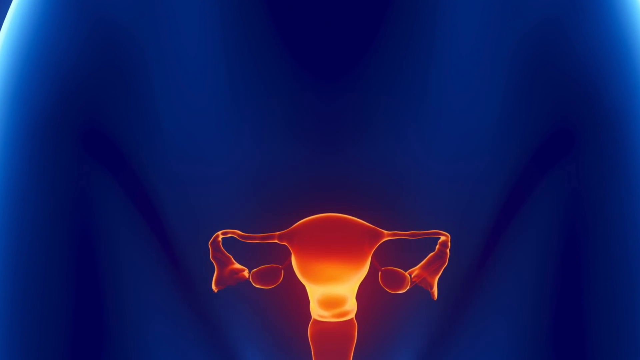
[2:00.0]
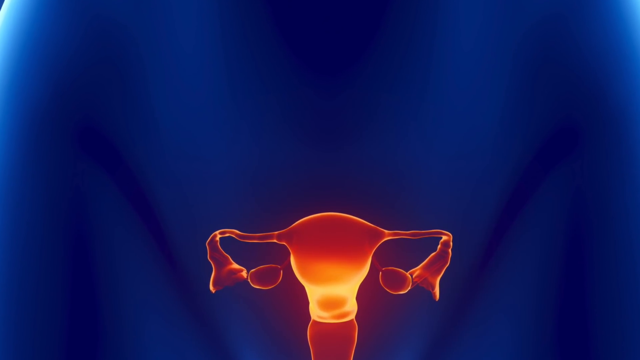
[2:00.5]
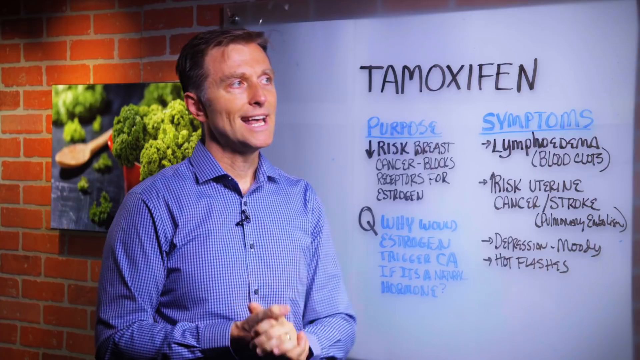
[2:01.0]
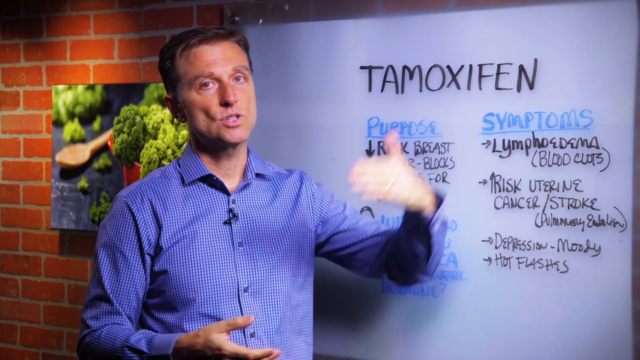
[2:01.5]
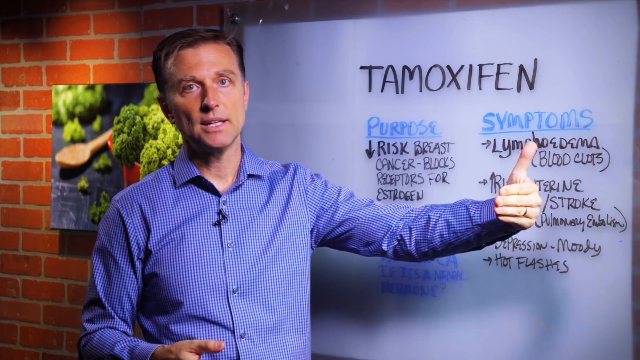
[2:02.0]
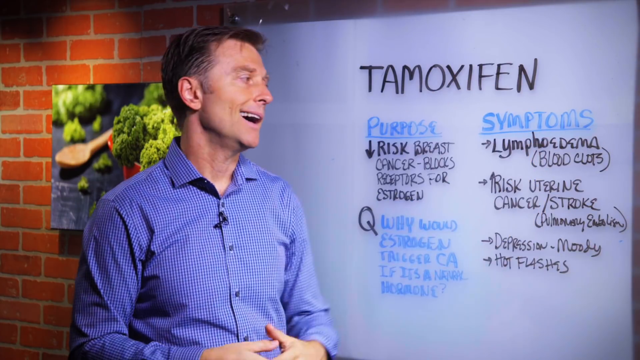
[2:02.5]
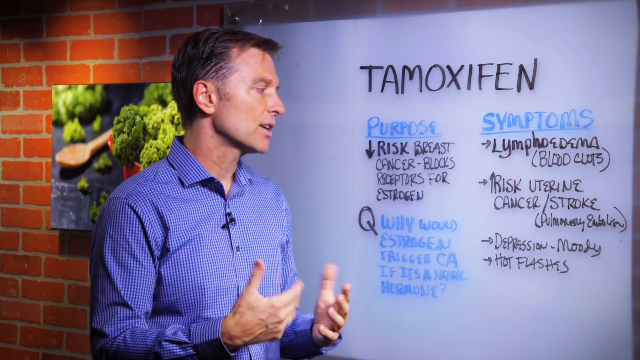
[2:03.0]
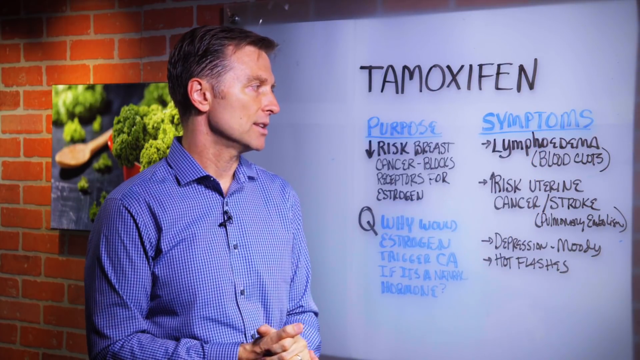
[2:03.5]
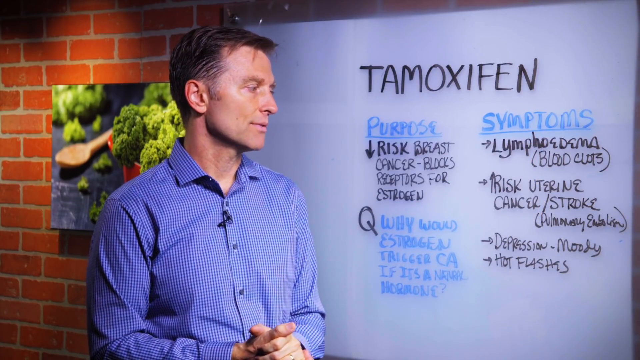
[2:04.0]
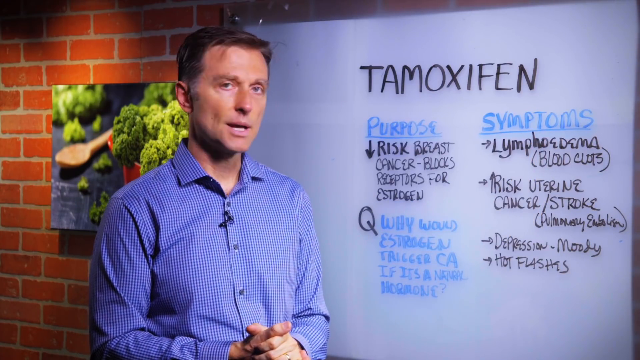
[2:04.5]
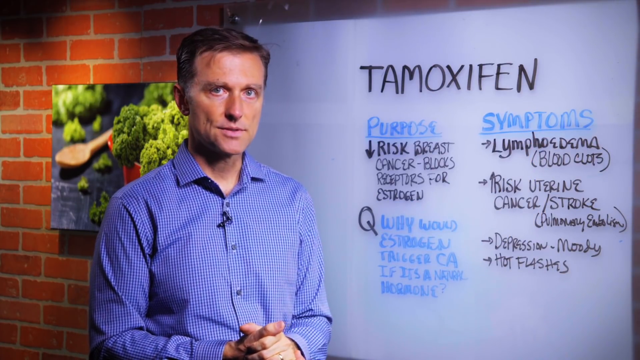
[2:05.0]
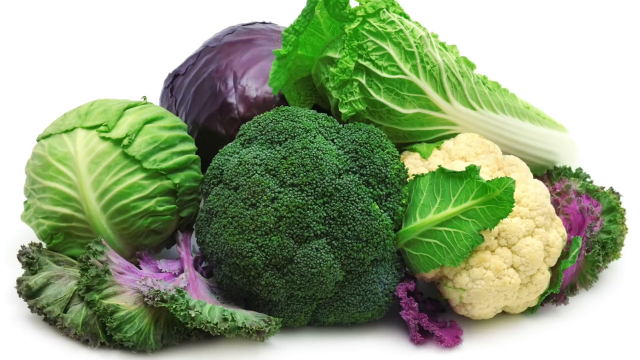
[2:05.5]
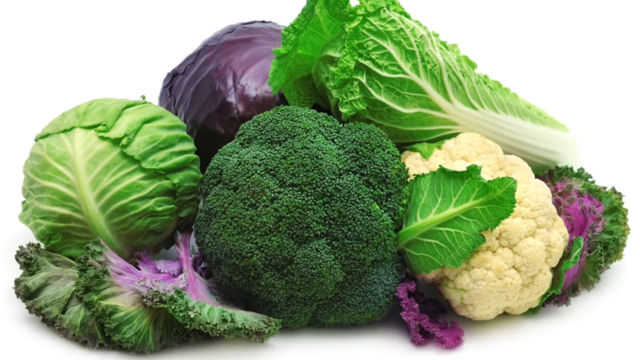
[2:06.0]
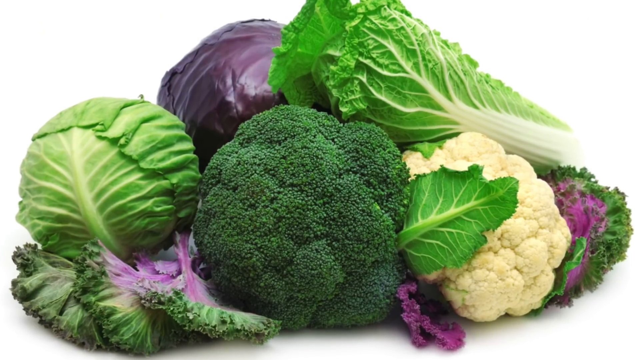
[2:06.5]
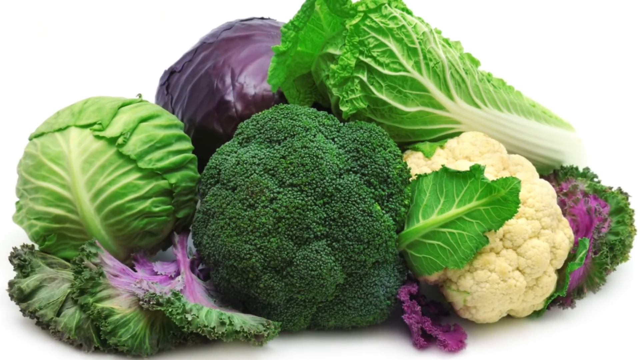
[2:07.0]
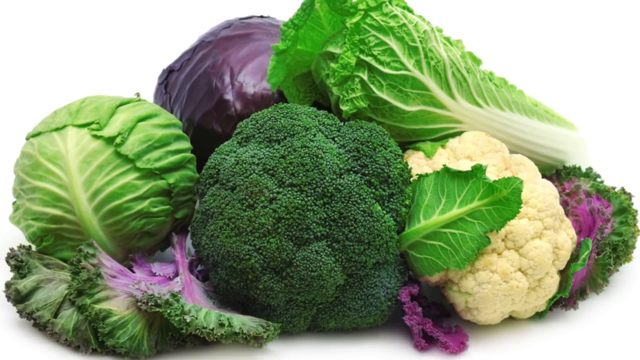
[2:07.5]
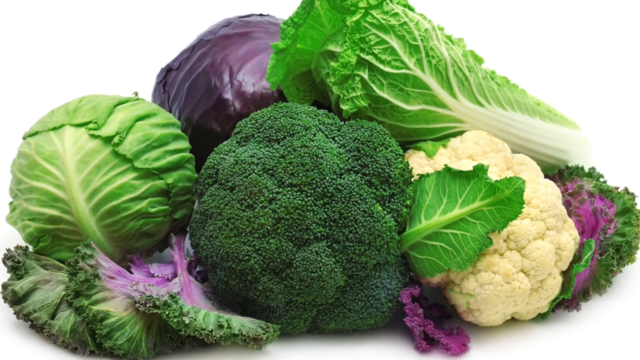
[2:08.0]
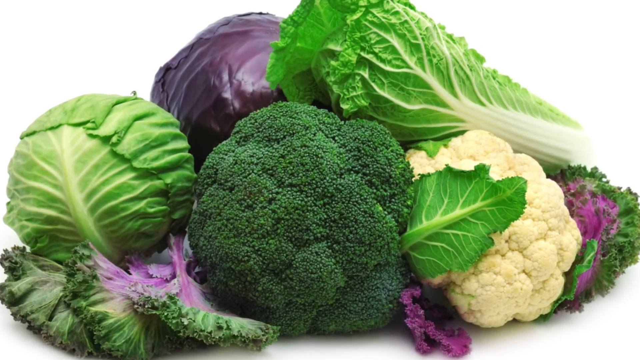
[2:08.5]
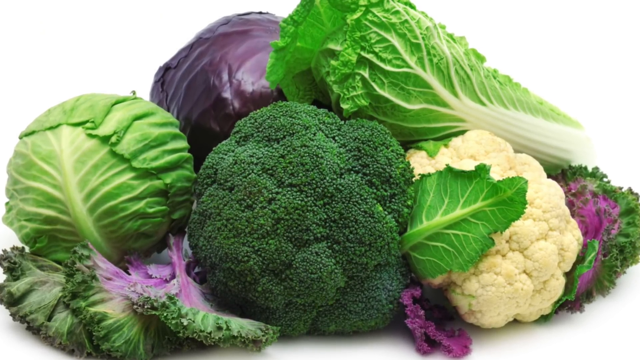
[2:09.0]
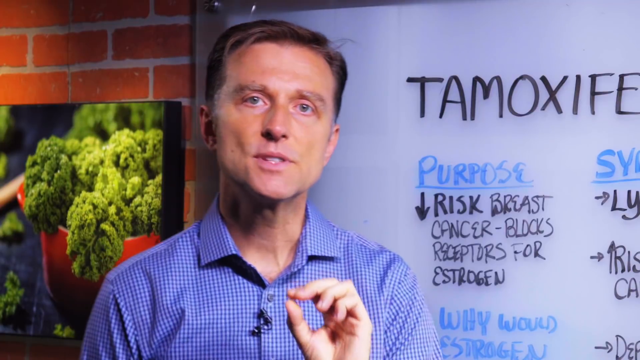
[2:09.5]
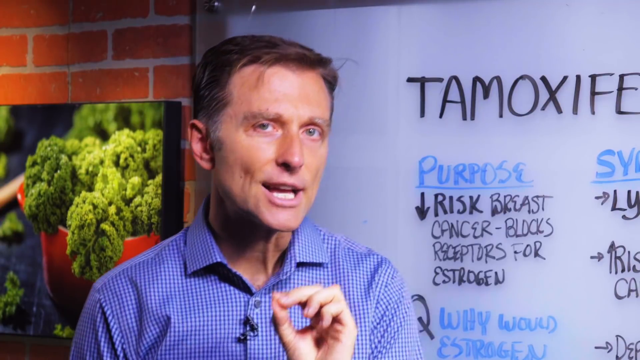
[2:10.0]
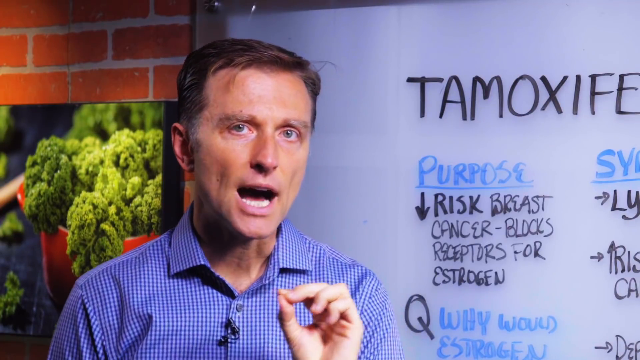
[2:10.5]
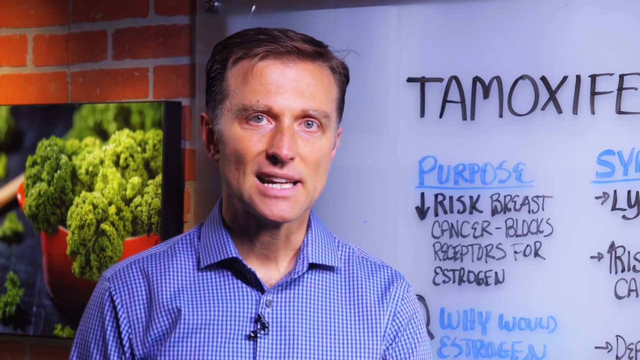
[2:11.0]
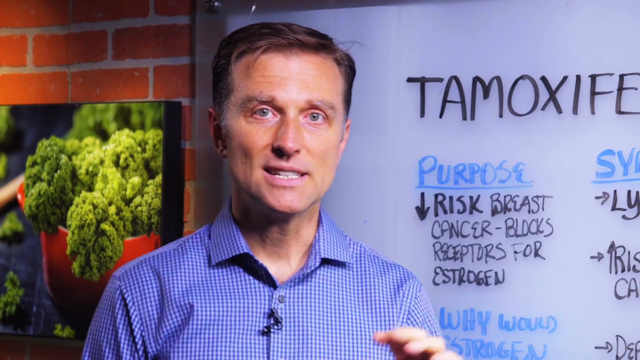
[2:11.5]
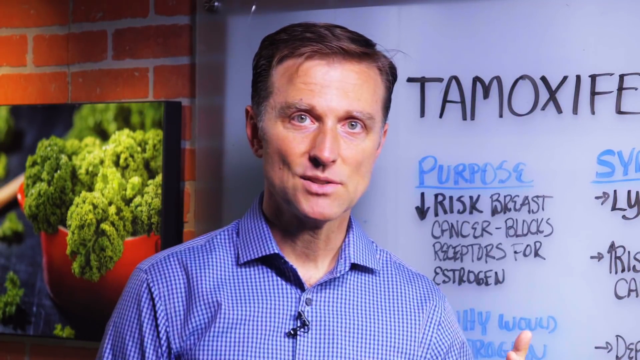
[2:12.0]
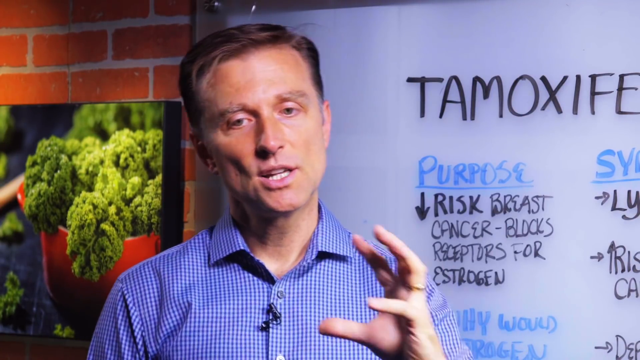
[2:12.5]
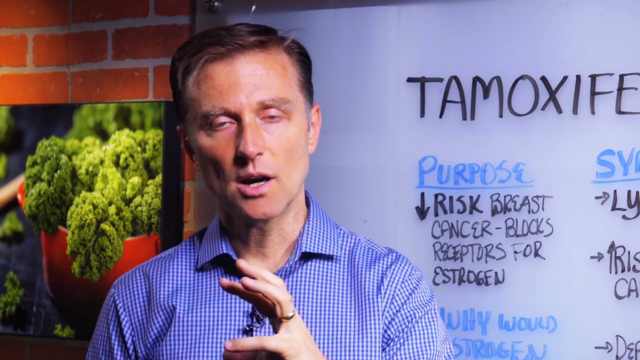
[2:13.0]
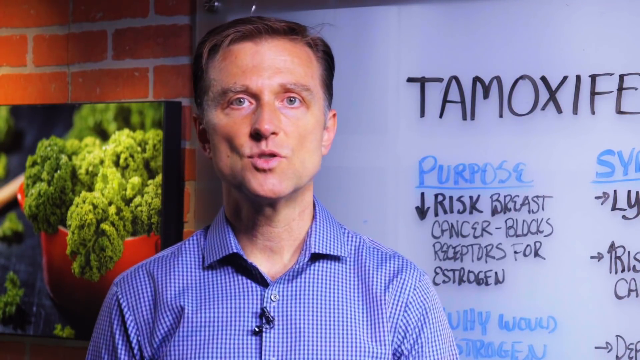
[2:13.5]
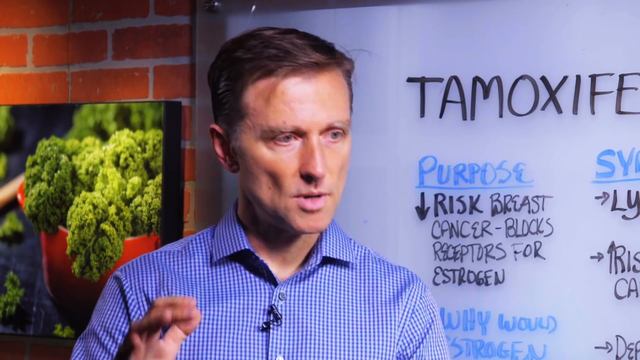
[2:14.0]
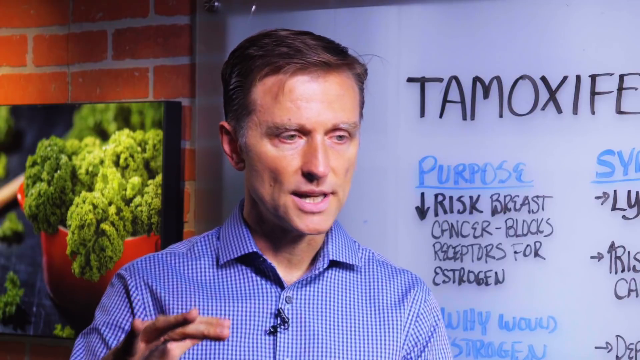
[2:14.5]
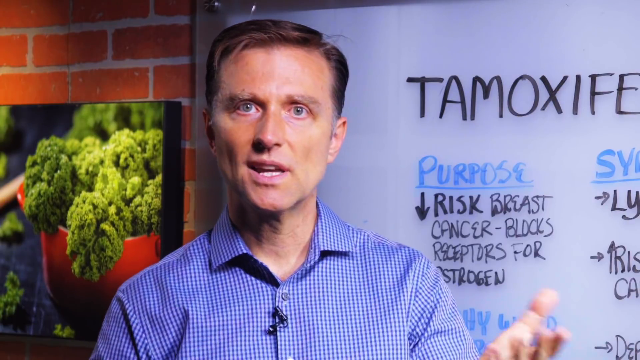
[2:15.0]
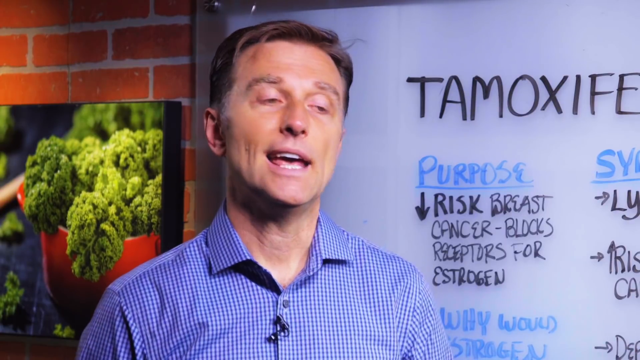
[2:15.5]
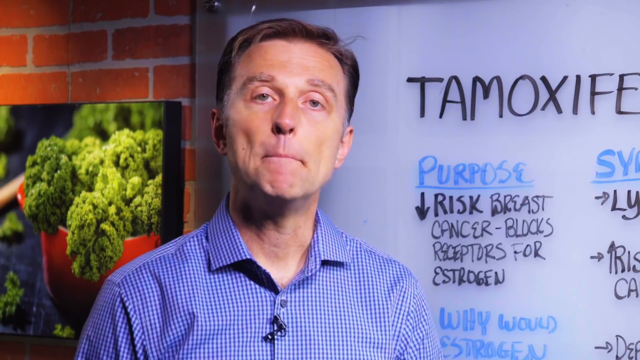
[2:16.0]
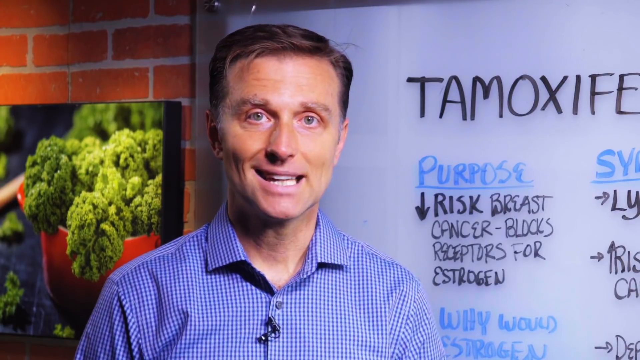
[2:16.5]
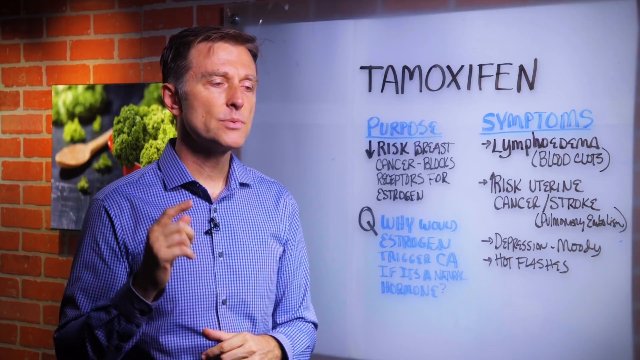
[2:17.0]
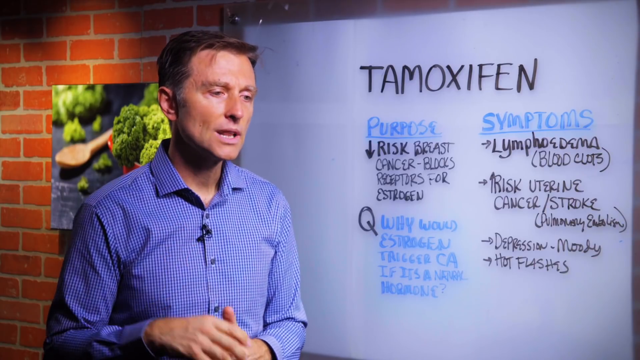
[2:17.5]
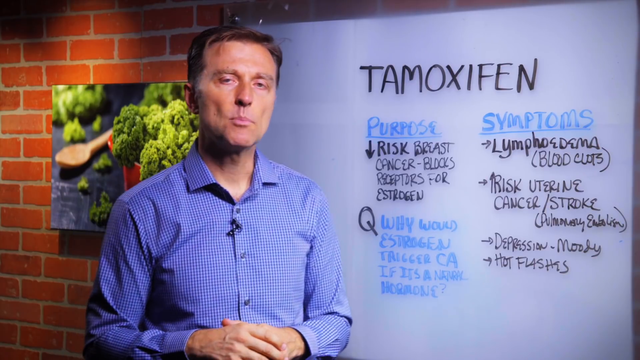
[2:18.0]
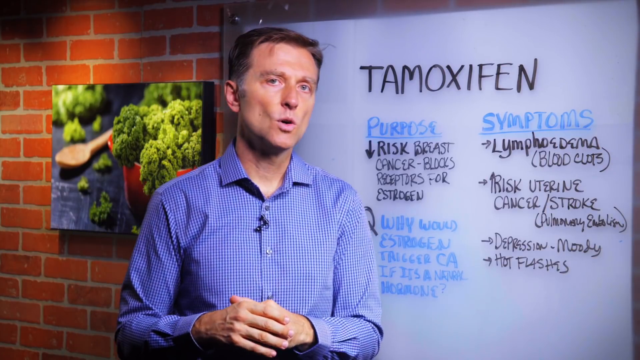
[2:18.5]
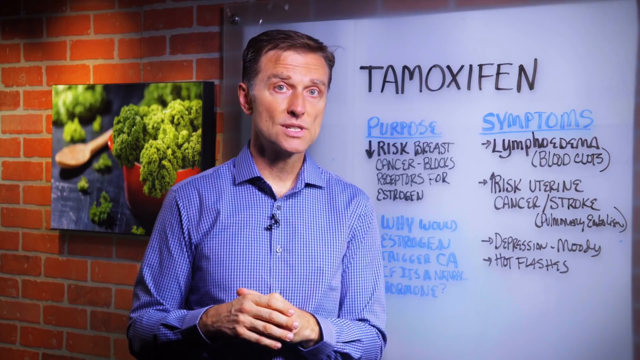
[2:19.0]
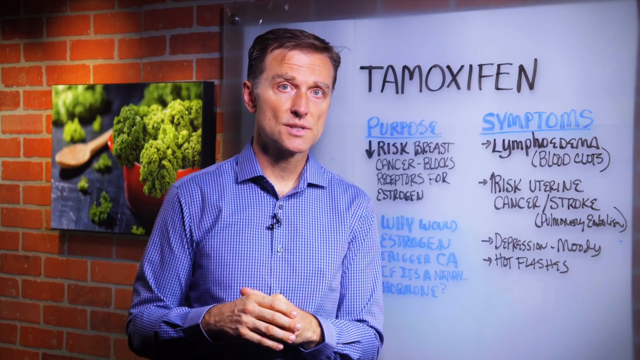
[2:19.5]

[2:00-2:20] An image of the female reproductive tract shows the uterus, fallopian tubes and ovaries on what looks like a blue background; the view kind of focuses on it, and the tract is a kind of golden color, kind of lit up. Then the man appears, a white man, probably a doctor, in a blue and white checked button-down shirt, with brown hair and gray sideburns, talking. Next comes a photo of a bunch of vegetables together: a green cabbage on the left with some kale in front of it, a red cabbage next to the green cabbage, something like bok choy in the back, broccoli in the front with cauliflower next to it bearing one green leaf, and another purple and green vegetable that is either lettuce or cabbage. It then cuts back to the man talking, using his hands a lot.